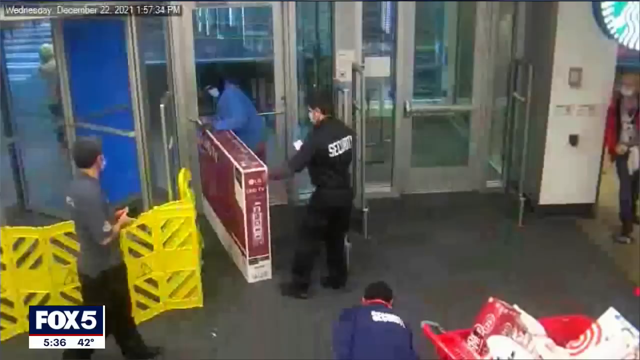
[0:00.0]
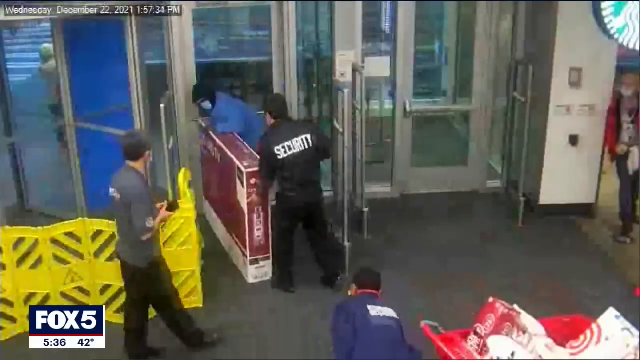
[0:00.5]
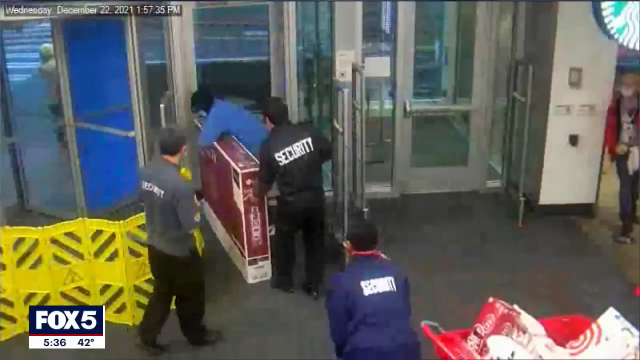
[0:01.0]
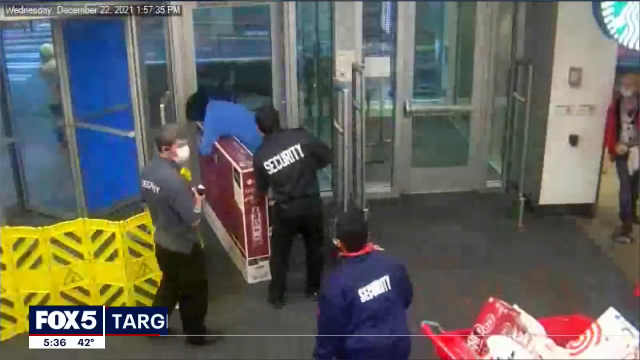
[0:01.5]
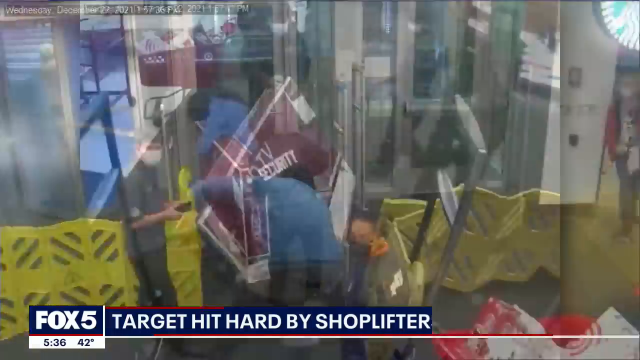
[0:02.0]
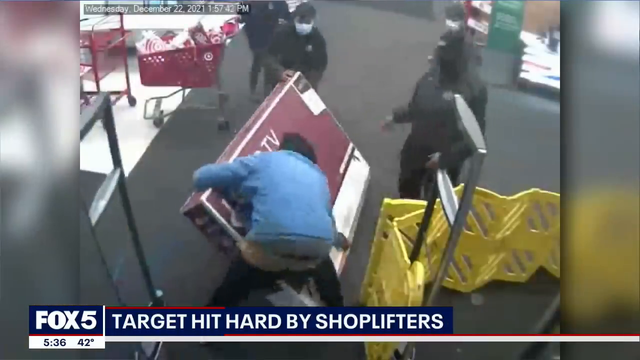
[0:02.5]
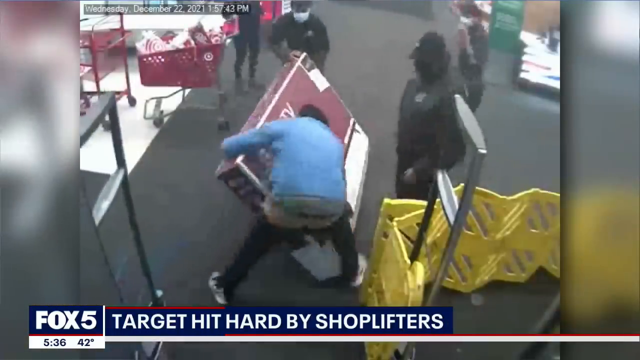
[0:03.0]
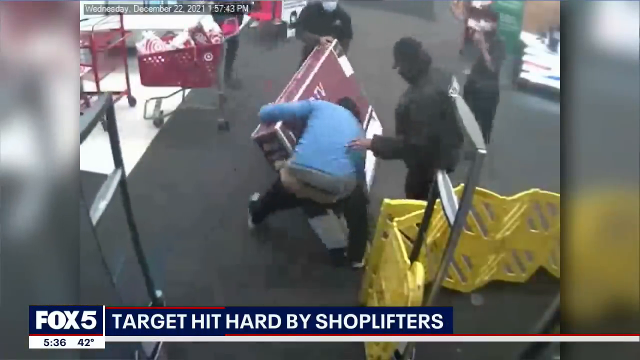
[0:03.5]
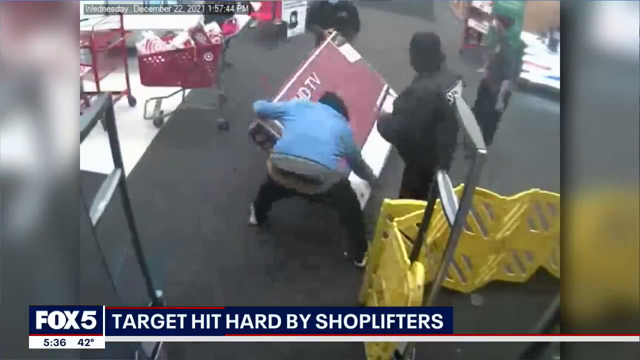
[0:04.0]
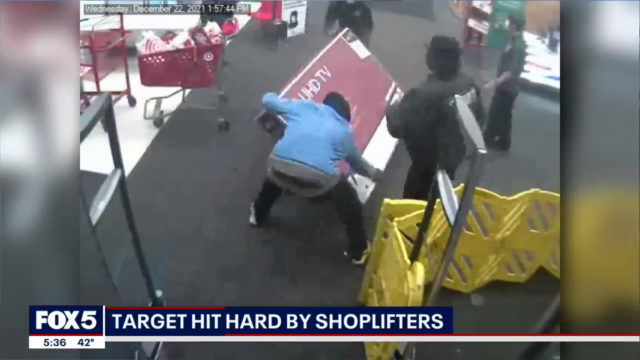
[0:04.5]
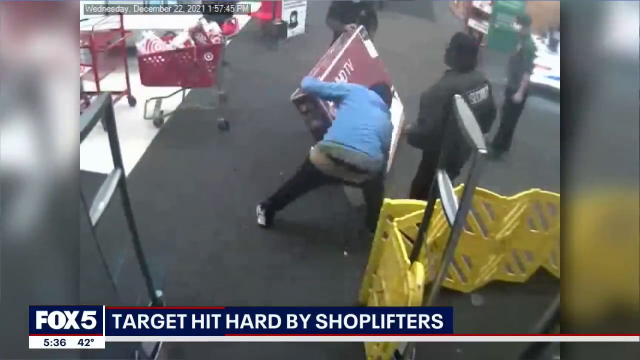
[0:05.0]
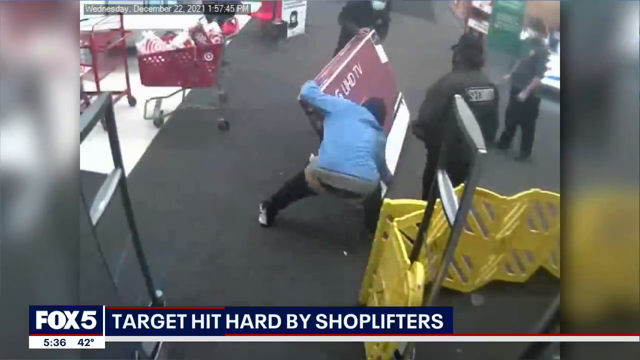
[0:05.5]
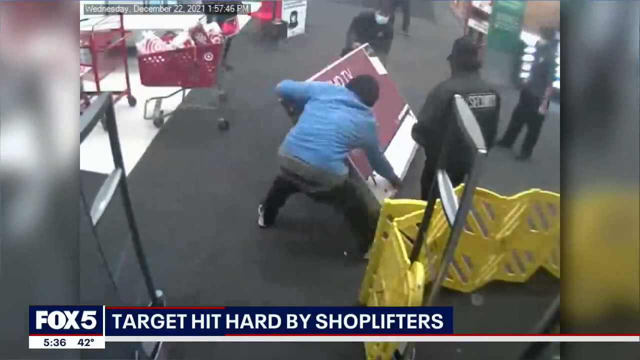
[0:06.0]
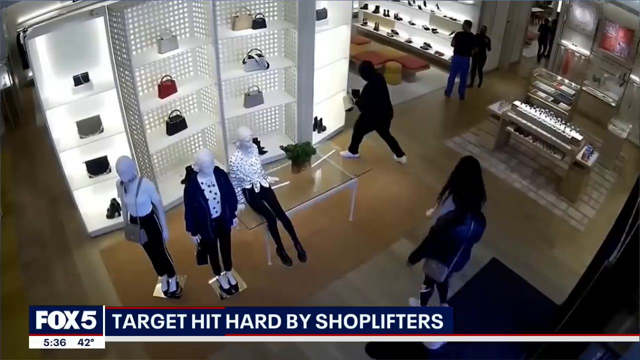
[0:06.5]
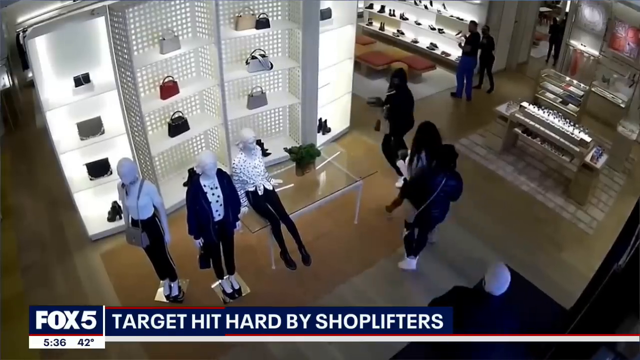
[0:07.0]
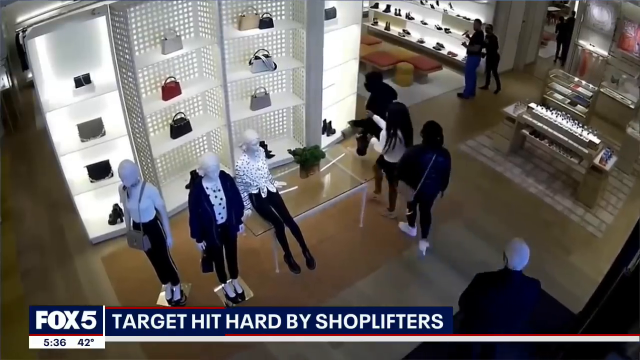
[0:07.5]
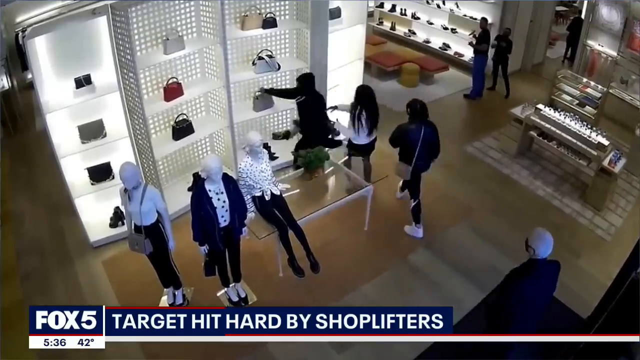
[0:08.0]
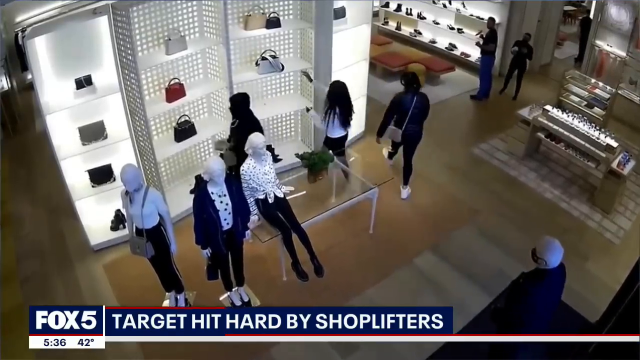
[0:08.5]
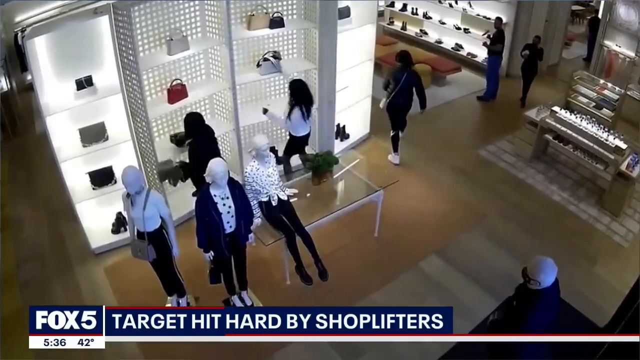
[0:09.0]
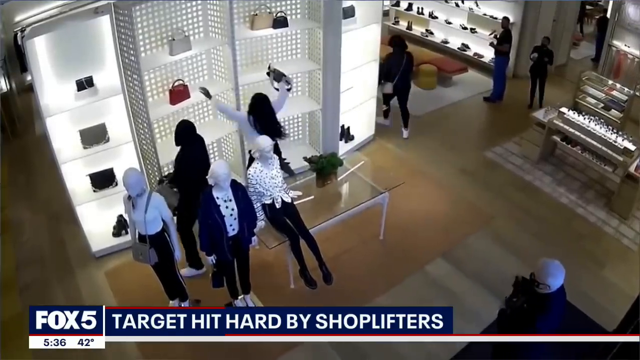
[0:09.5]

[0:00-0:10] Footage is taken inside a store, where many large doors serve as exits from the store to the outside parking lot. In the middle of the screen is a man wearing a mask; he has dark hair and wears black pants and a black shirt, with the word "SECURITY" written in all capital letters in large white font across the top of the back of his shirt. He appears to be assisting a person in a blue shirt and a dark hat who wears a mask, and they appear to be trying to shuffle a blue TV fitted inside a cardboard box outside the door. On the left side of the screen is a man in a gray short-sleeved T-shirt with dark hair, also wearing a blue mask. In the first part of the footage, there appears to be a very large plastic yellow corridor gate covering part of the doors. The Fox 5 News logo is in the lower left corner. After several seconds, the title "Target hit hard by shoplifters" appears. Another shot shows three to four men picking up a very large TV in a red and white box, with several Target shopping carts in frame. At the very end, more footage from inside the store shows a man and a woman quickly grabbing items off a shelf and shuffling out of the store.